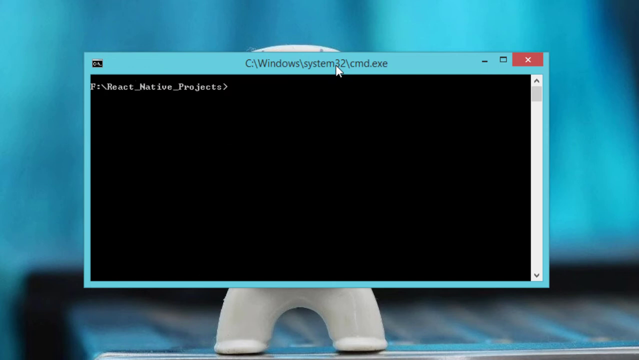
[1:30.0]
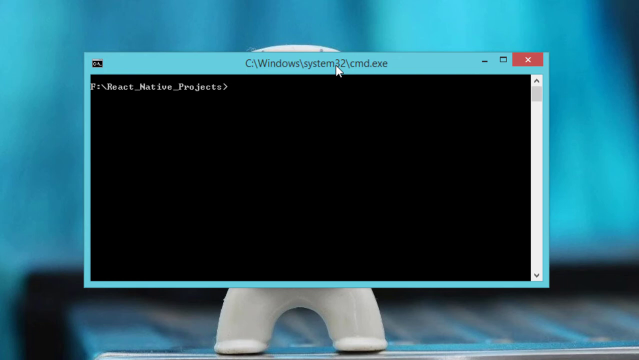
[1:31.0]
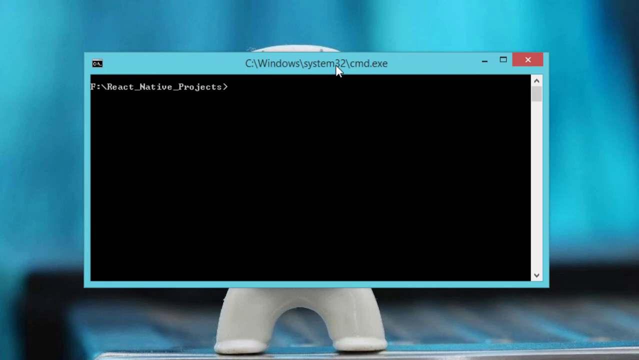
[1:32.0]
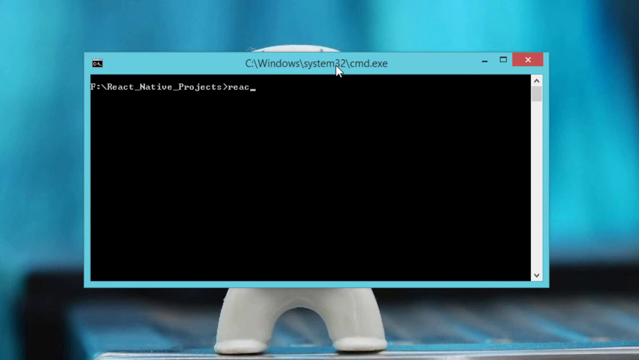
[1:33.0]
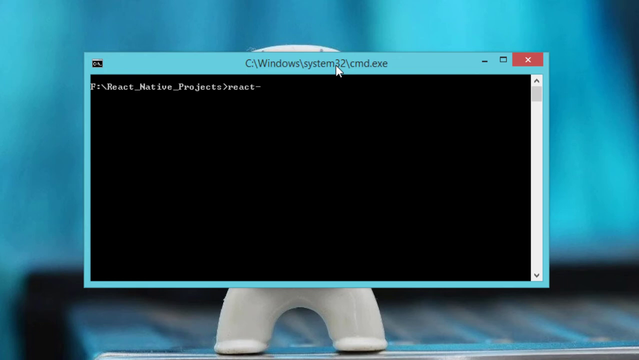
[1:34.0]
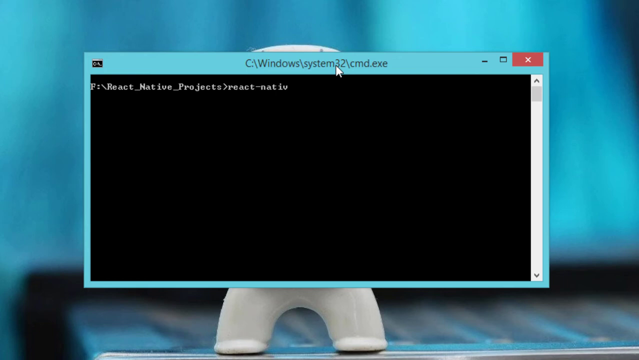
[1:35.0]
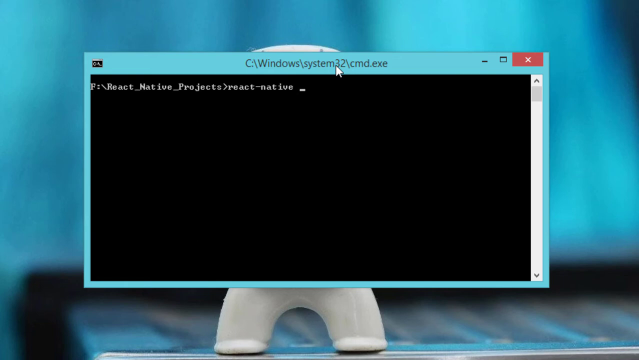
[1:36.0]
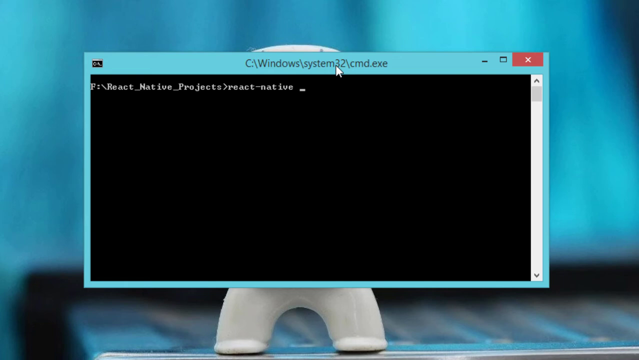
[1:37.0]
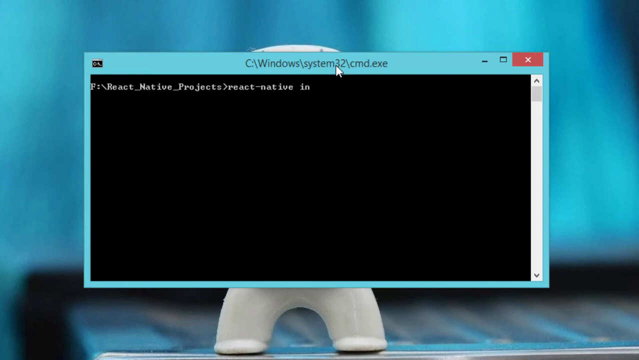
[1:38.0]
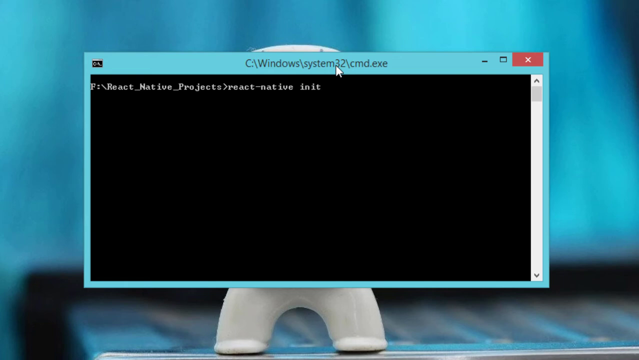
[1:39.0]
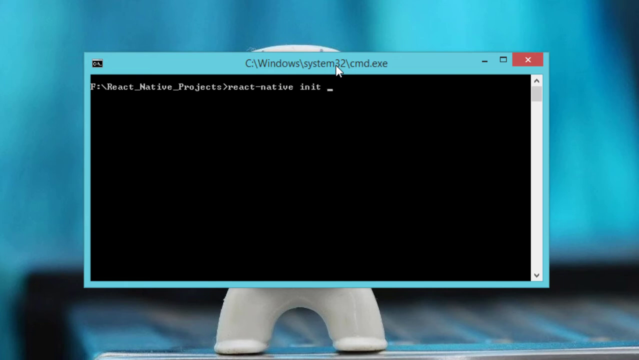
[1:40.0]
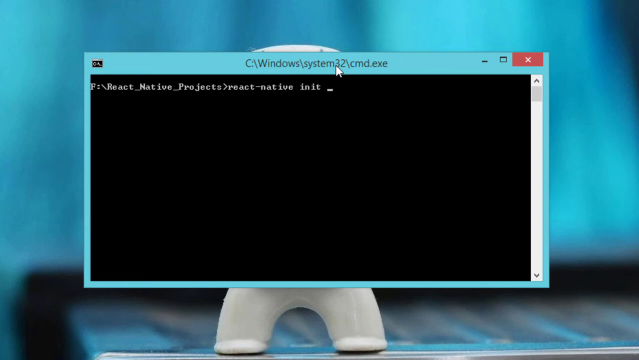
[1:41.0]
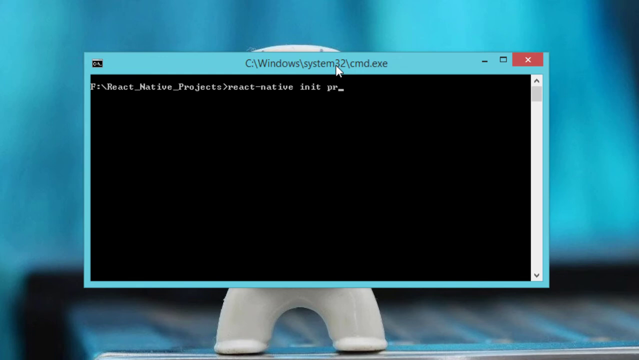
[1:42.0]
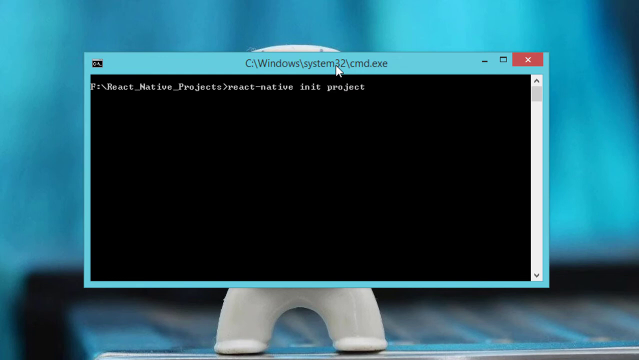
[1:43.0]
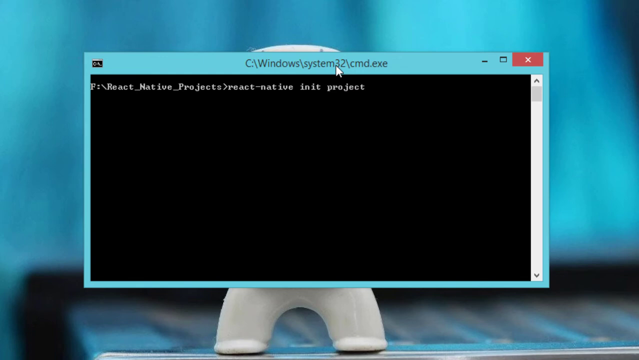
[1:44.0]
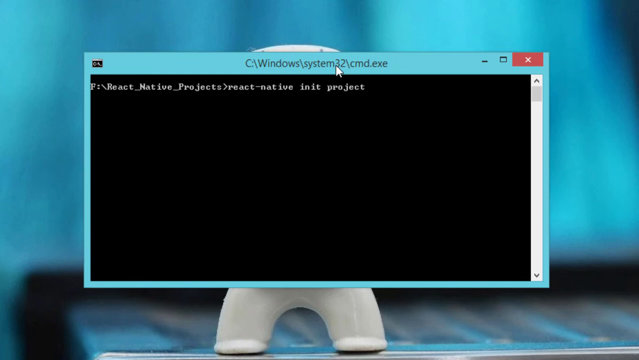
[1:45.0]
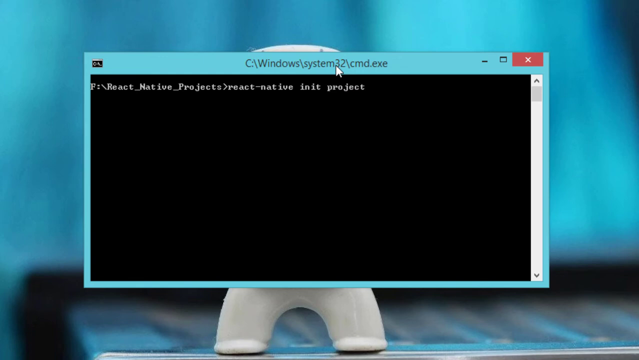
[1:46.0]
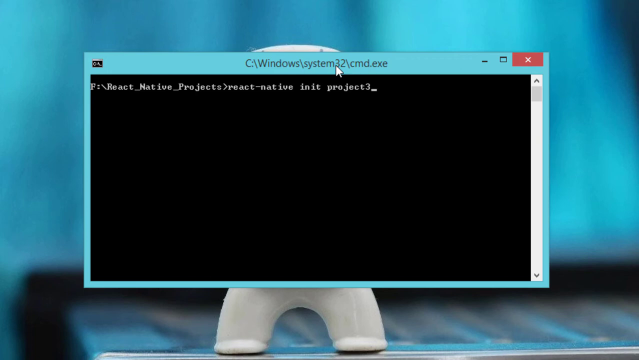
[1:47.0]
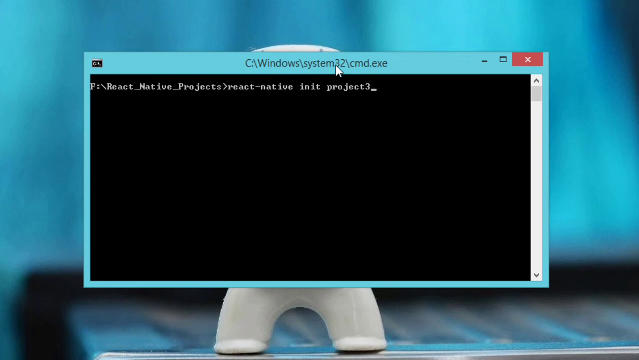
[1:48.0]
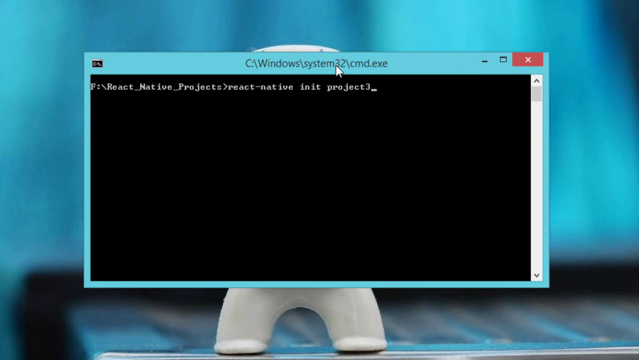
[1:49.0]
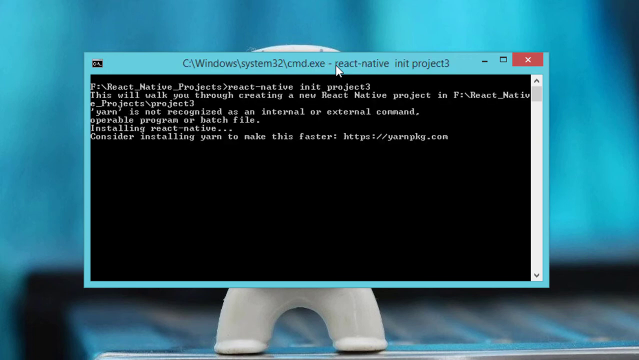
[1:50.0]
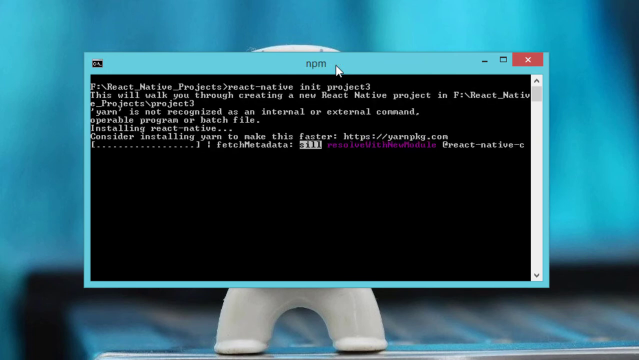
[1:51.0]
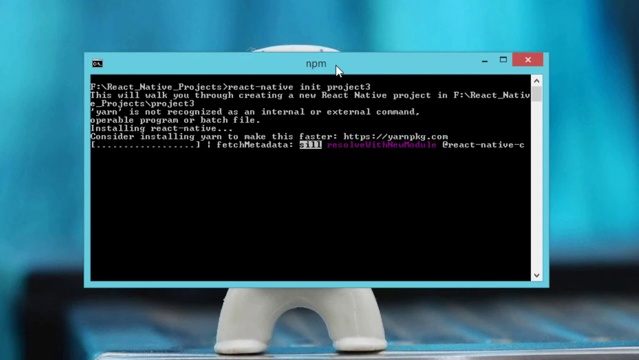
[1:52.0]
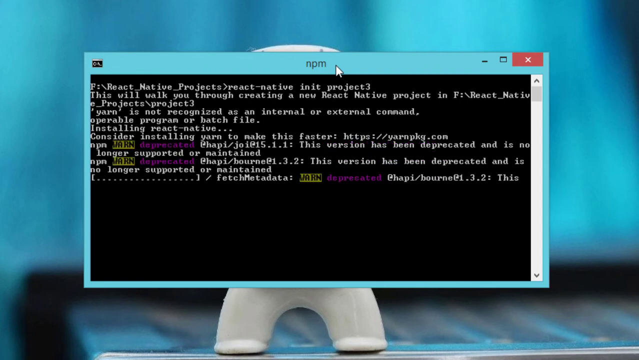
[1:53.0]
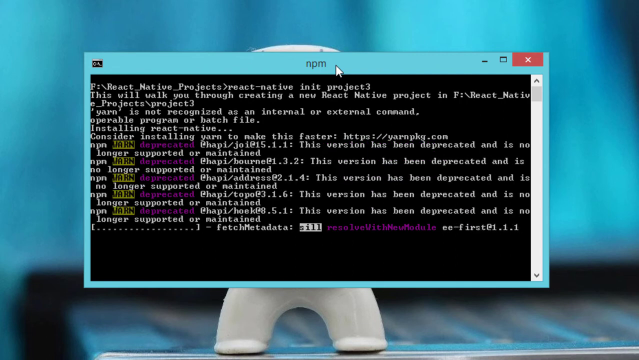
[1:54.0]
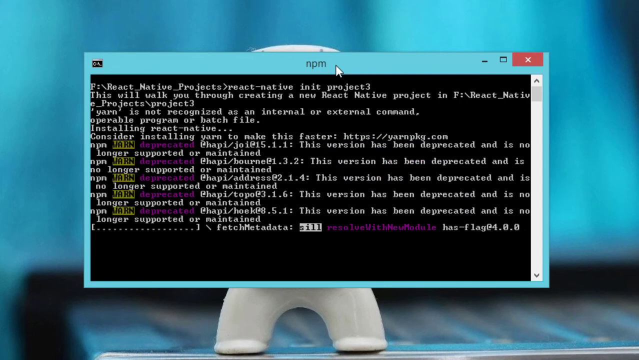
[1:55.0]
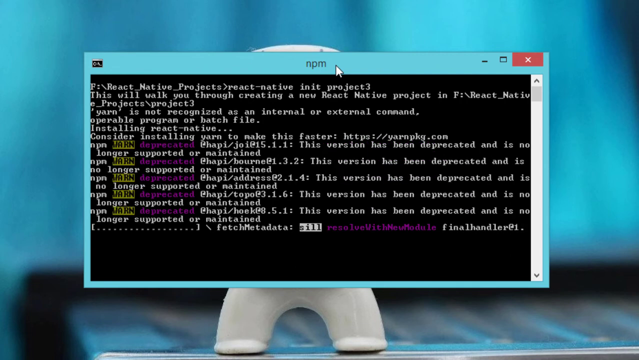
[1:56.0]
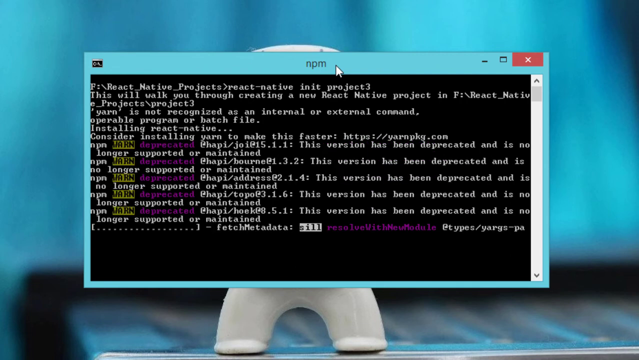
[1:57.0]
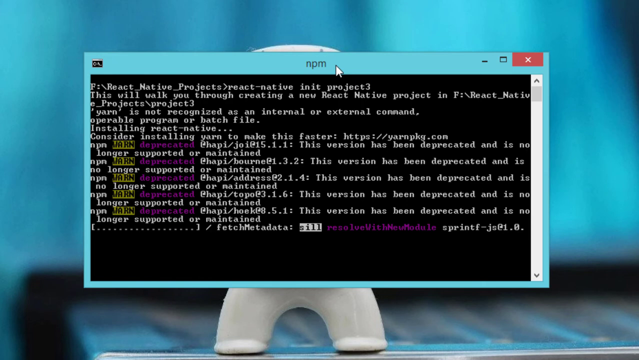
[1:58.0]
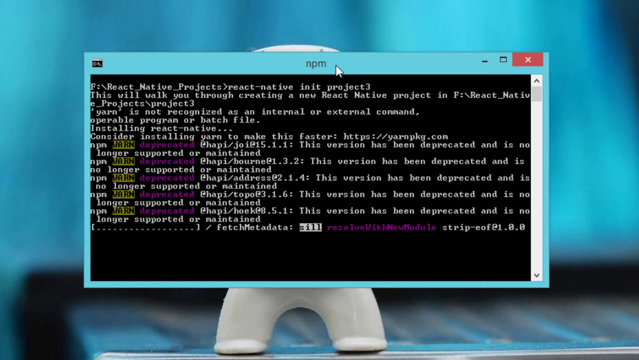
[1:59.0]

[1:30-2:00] Inside the F react-native-projects folder, the user runs a react-native init command to create a new React Native project named project3. React Native begins its setup, saying it will walk through creating a new project. It tries to use yarn but shows the message that yarn is not recognized, then falls back to npm to install the necessary files. During the process, several npm deprecated warnings appear for certain packages. A fetch-metadata line appears as npm checks version 0.62.1 of React Native.